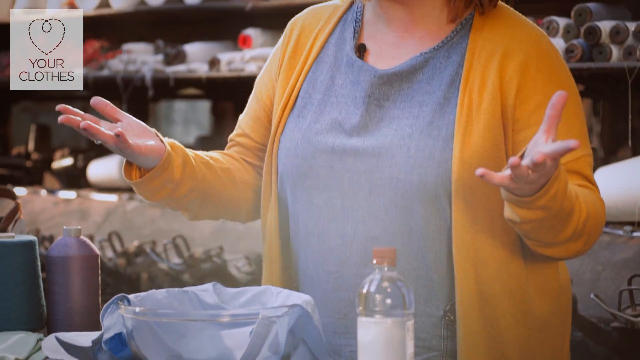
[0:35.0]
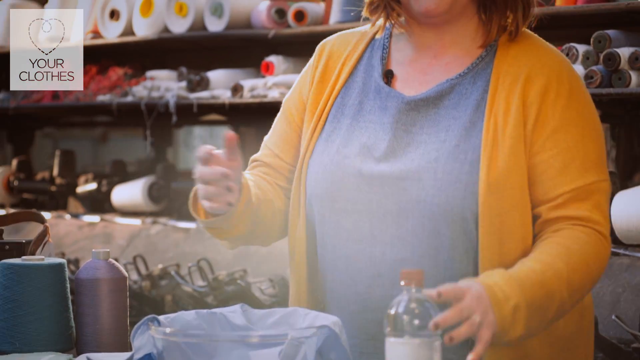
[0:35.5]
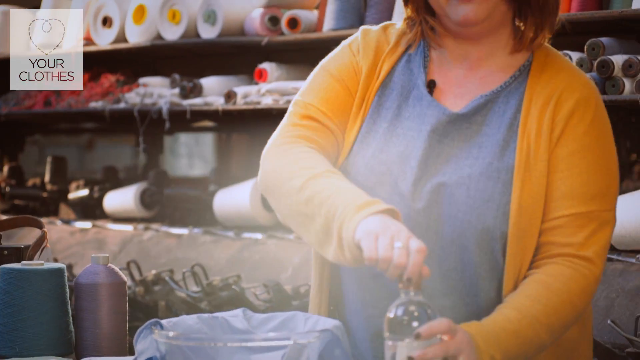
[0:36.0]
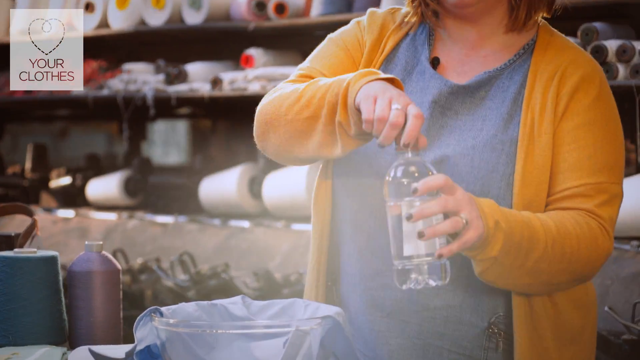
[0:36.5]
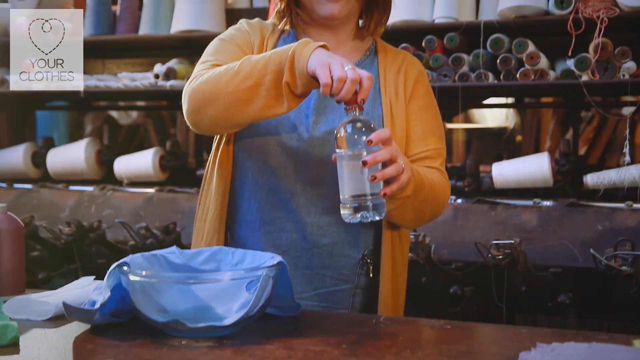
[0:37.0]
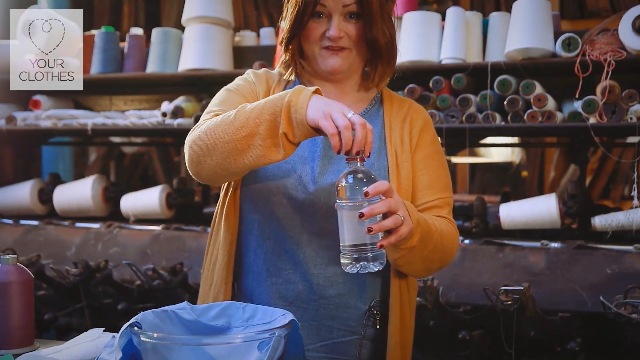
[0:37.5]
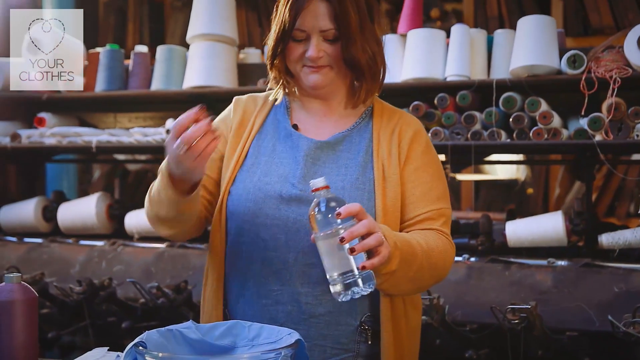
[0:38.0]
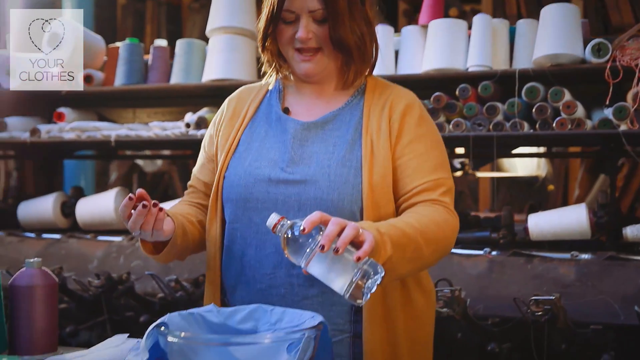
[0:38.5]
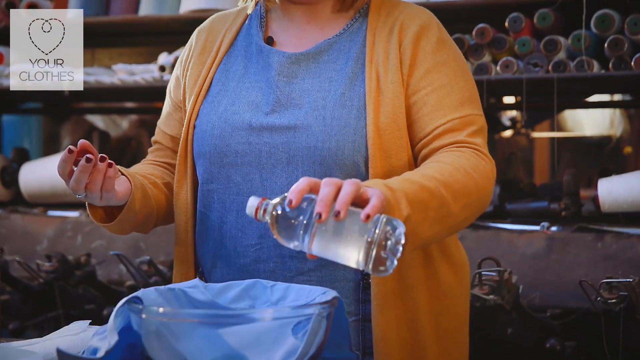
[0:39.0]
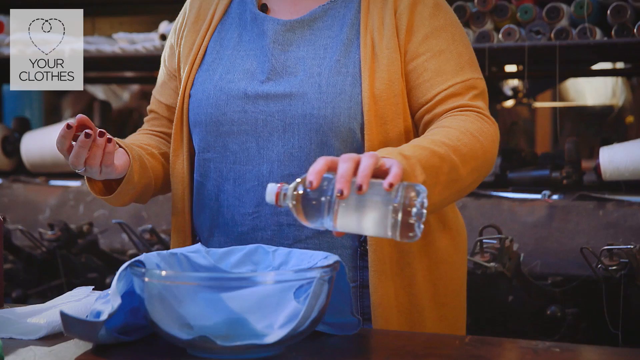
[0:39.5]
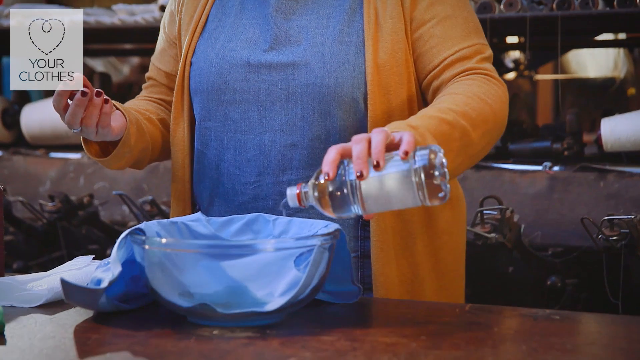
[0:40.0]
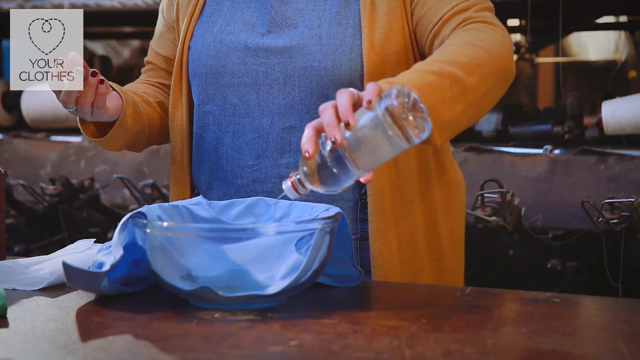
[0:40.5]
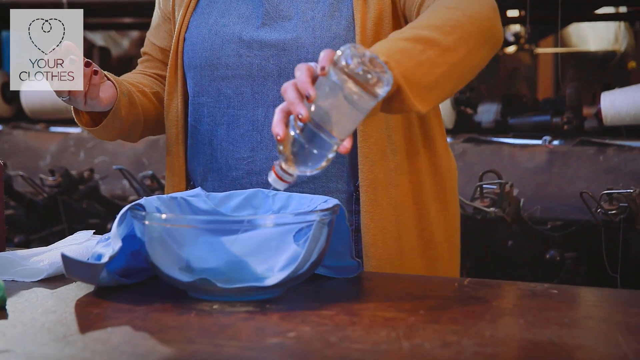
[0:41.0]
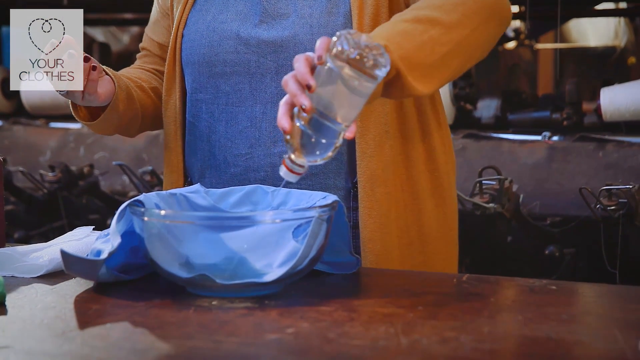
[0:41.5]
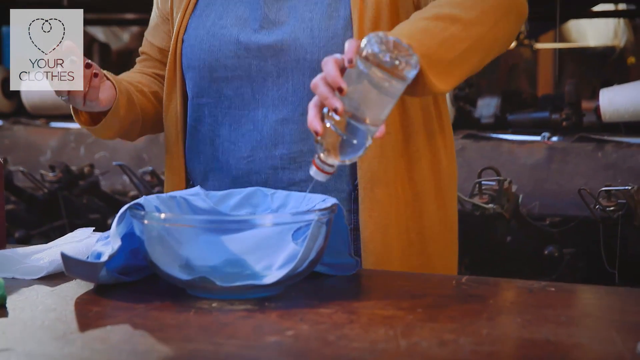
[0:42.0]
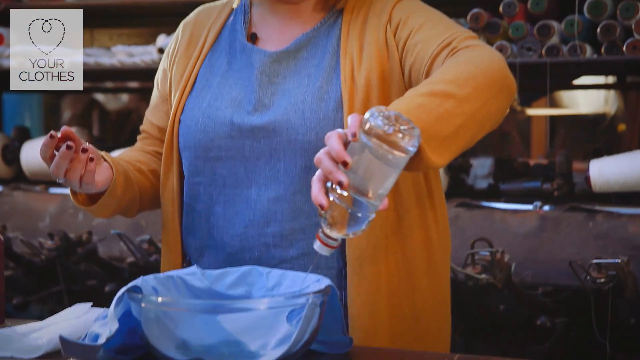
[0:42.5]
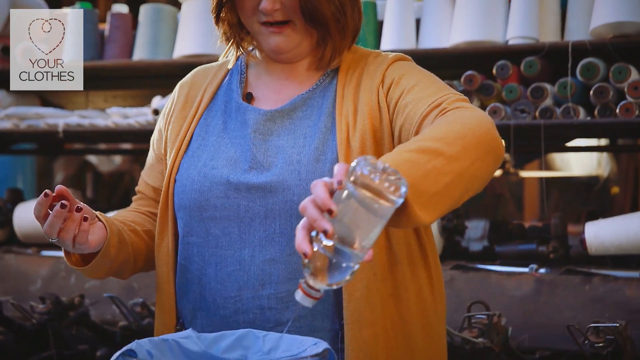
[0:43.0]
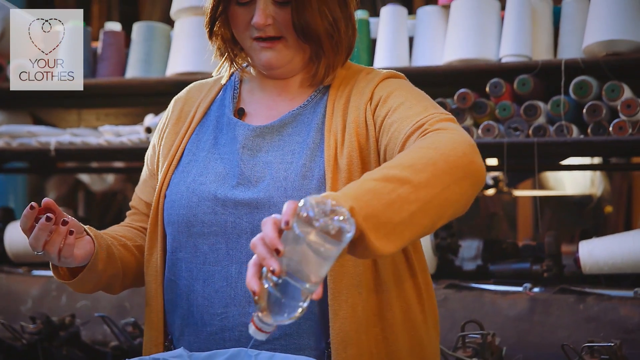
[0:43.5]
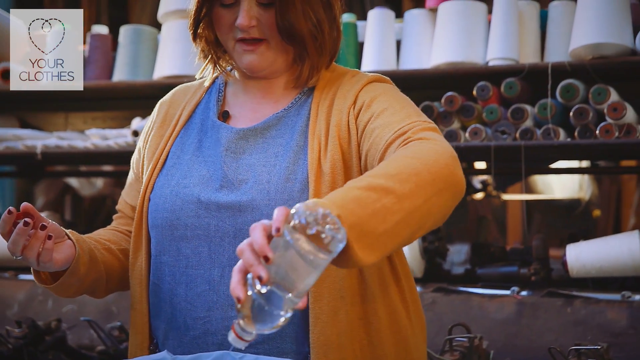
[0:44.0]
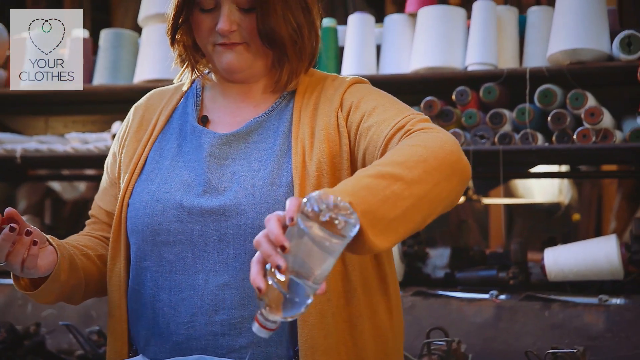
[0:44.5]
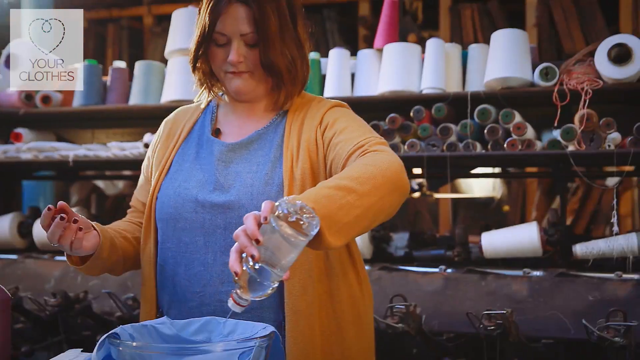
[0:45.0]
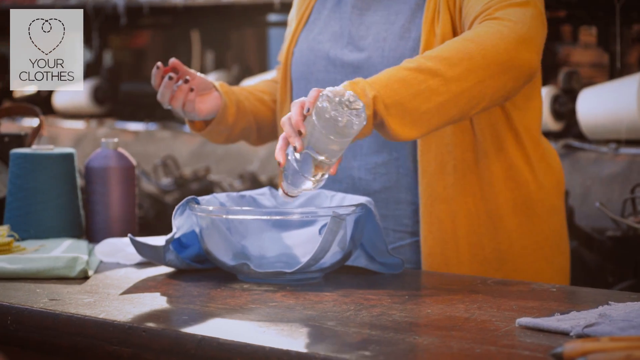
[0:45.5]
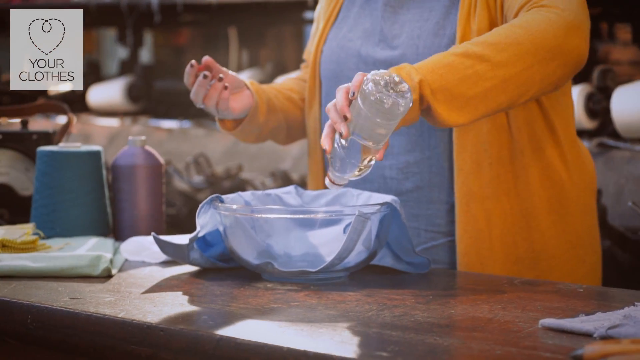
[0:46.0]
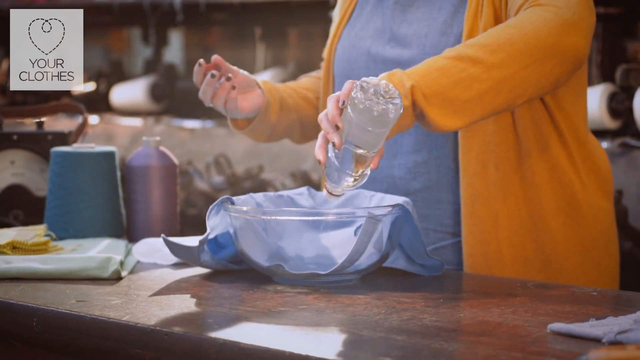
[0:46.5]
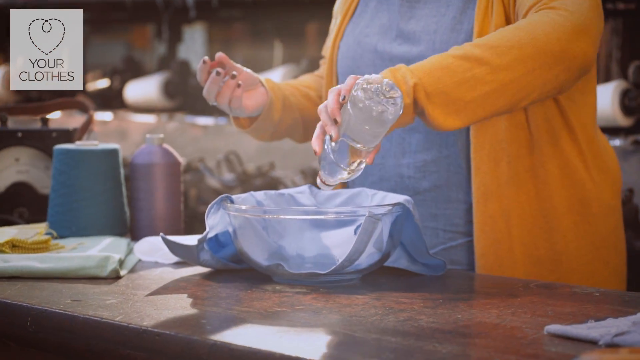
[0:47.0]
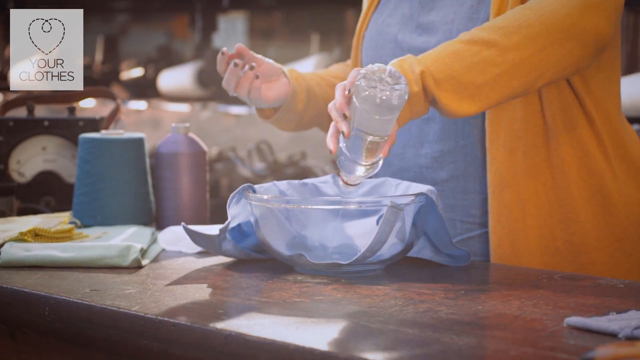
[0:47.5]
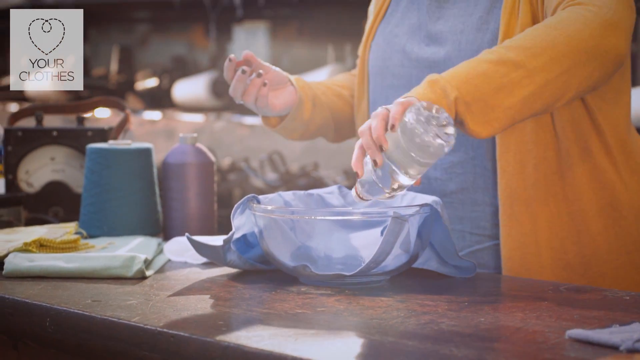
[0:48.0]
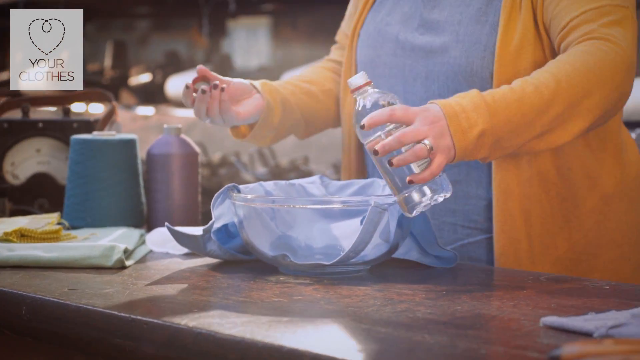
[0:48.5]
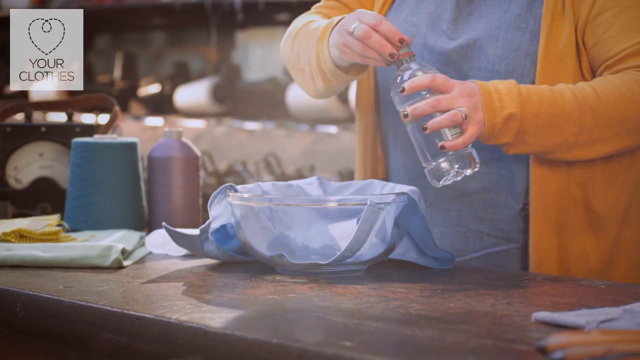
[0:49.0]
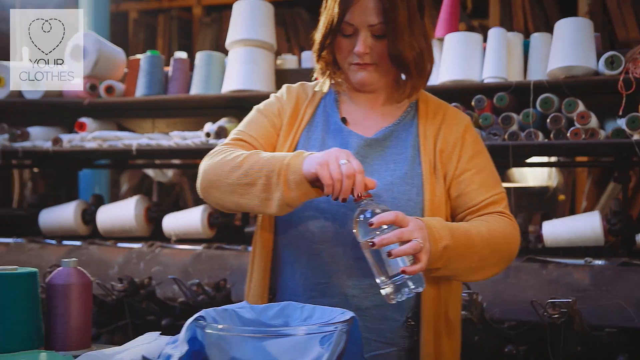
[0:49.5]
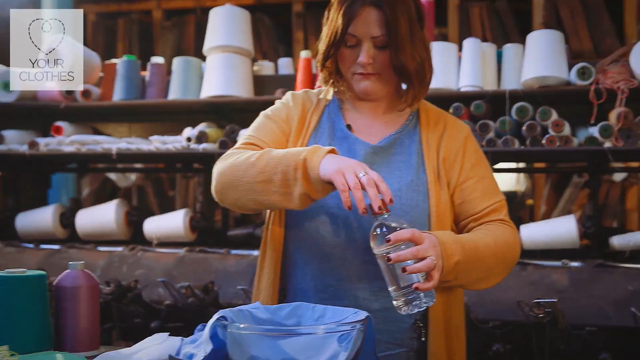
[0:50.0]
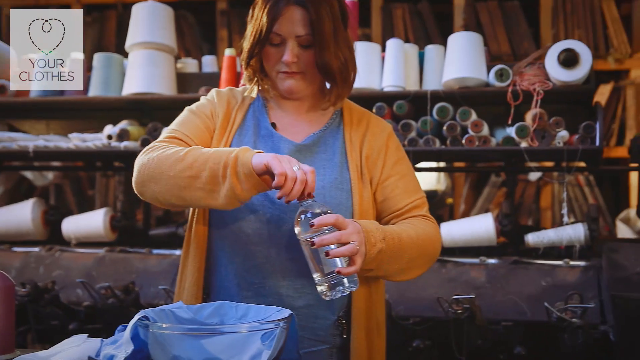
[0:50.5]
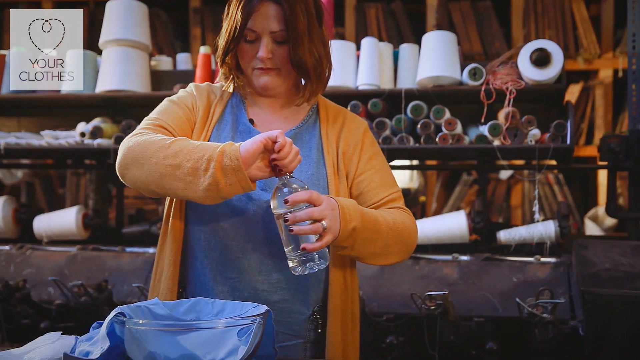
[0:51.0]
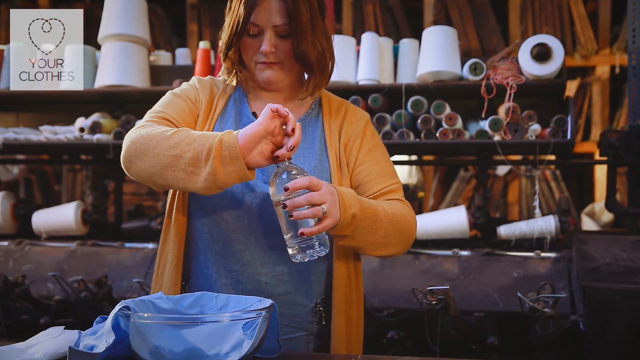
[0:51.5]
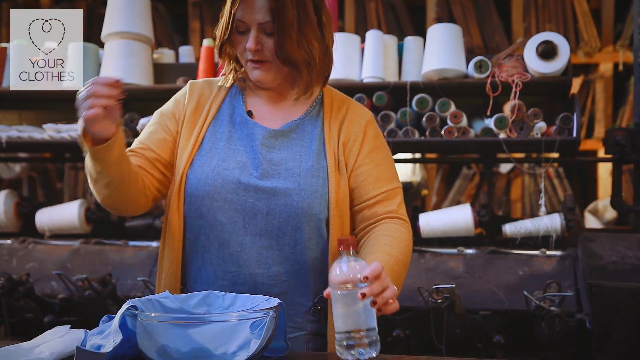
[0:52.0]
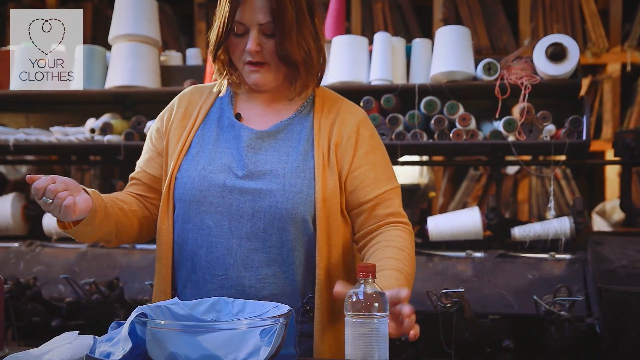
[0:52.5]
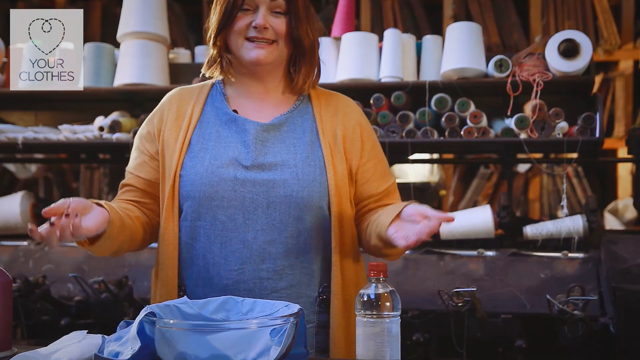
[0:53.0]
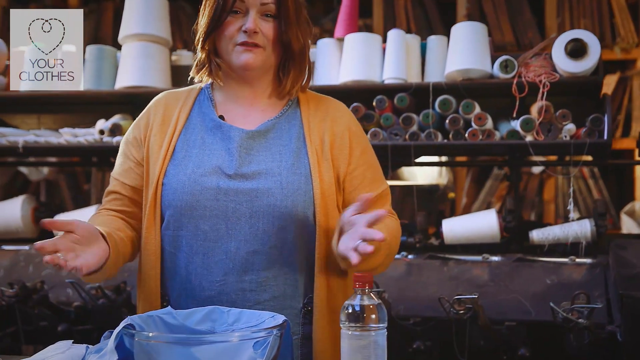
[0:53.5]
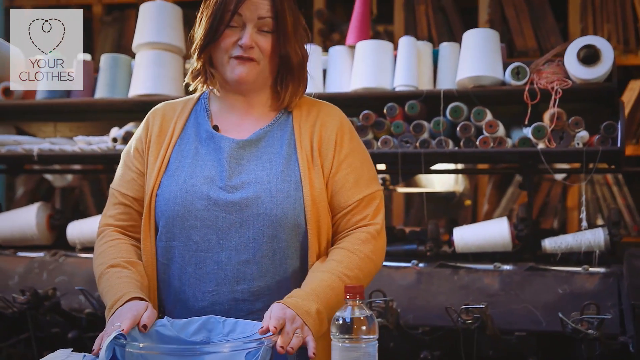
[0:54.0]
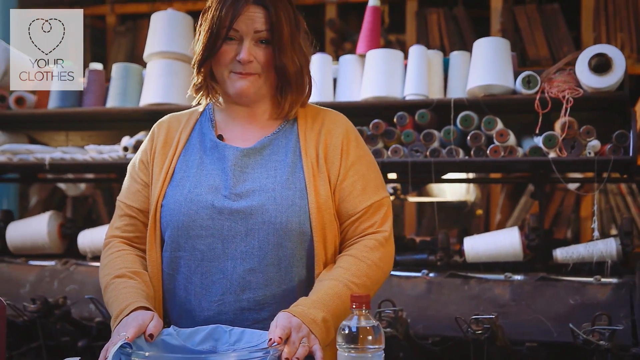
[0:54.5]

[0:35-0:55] The video appears to show how to clean a piece of cloth or clothing. A young woman wearing a long-sleeved yellow sweater with a blue top underneath stands at a wooden-topped table. On it is a glass bowl with a blue piece of cloth or clothing draped into it. She picks up a bottle of clear liquid with a red cap from beside her, takes the cap off, angles it and squeezes it. A little of the liquid misses the bowl, and then she aims it down at the section of clothing in the bowl, heavily coating the interior of the bowl while letting only a thin stream come out of the bottle. She then tightens the cap back onto the bottle and places it on the wooden table. Spools of different types of yarn and material are in the background.